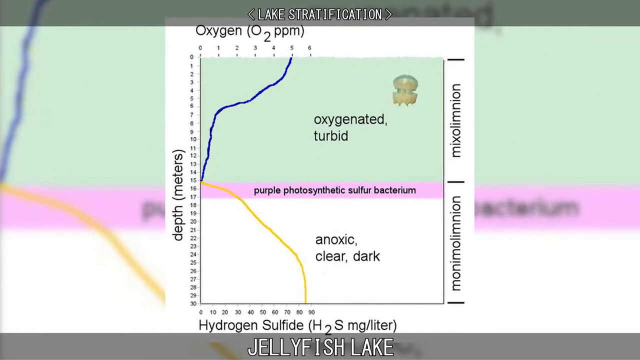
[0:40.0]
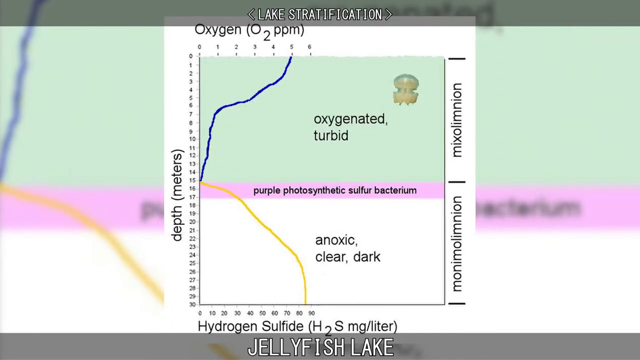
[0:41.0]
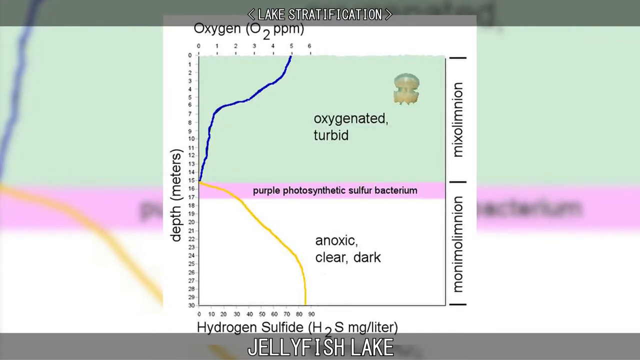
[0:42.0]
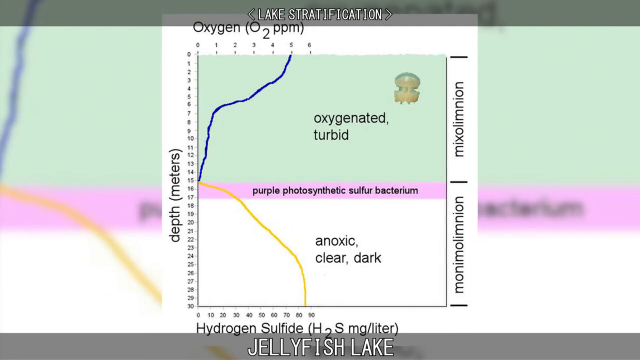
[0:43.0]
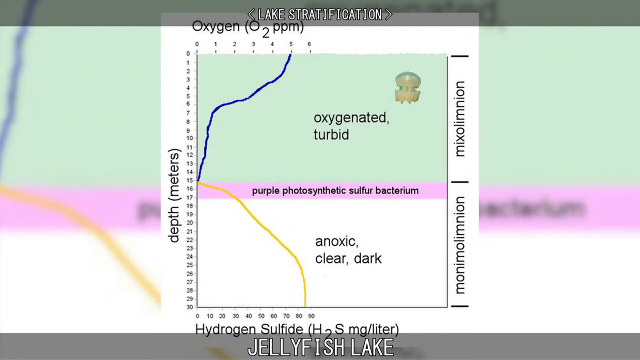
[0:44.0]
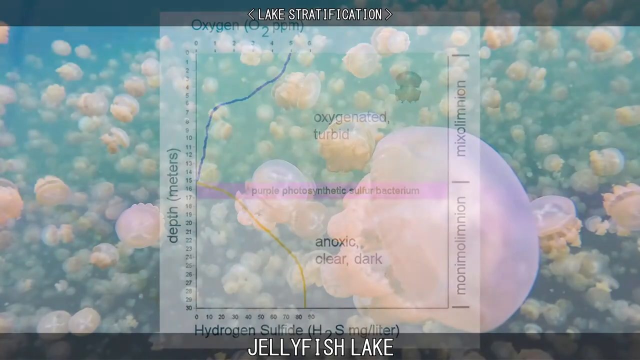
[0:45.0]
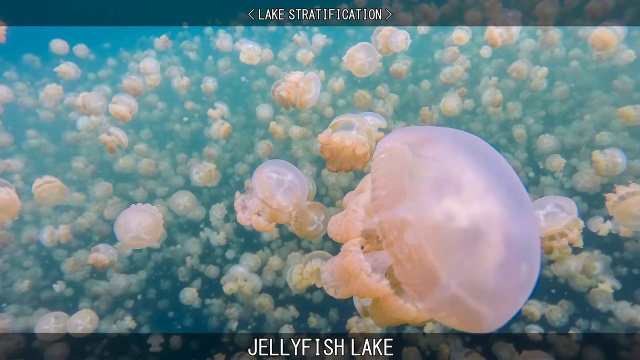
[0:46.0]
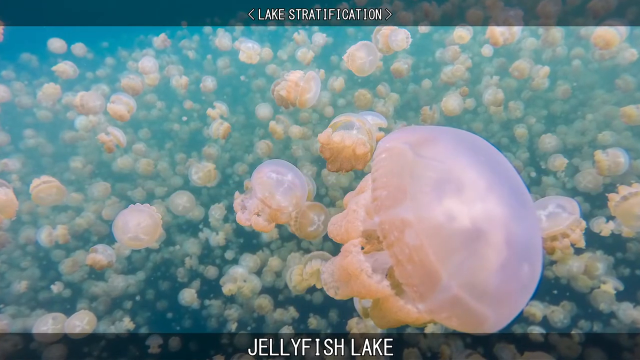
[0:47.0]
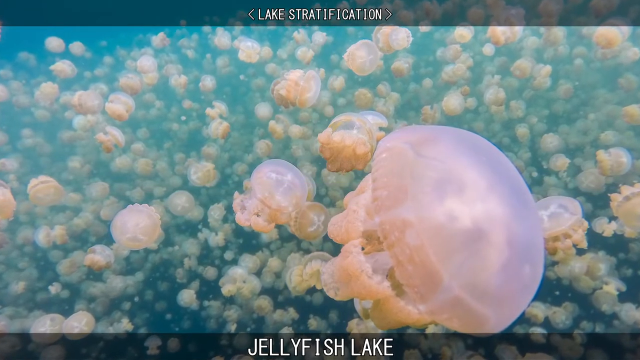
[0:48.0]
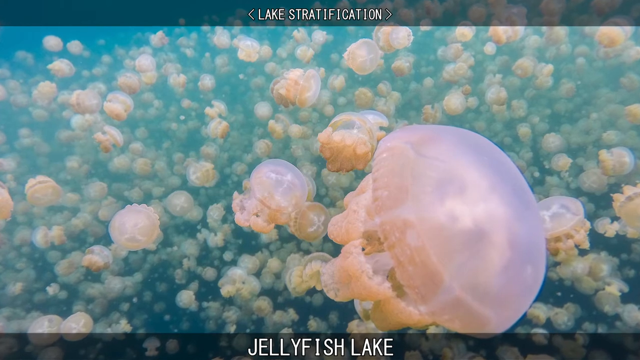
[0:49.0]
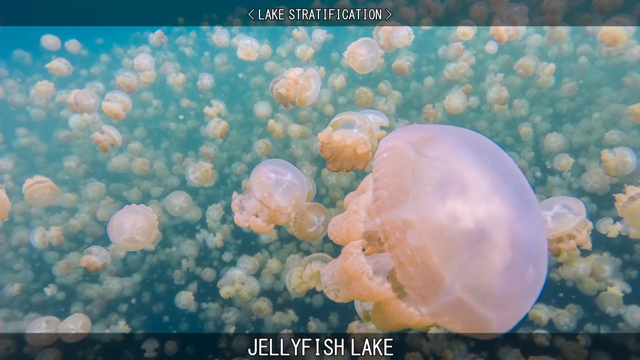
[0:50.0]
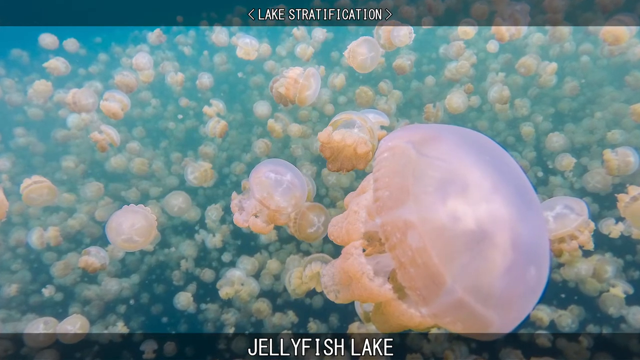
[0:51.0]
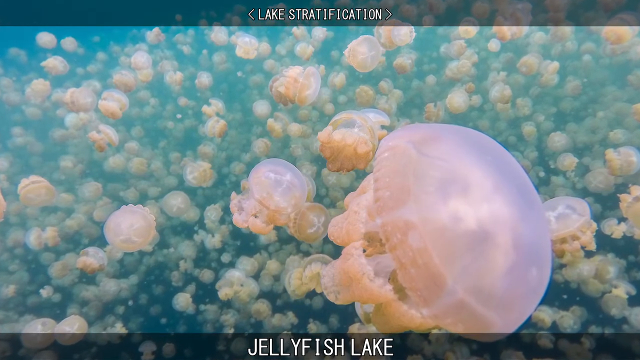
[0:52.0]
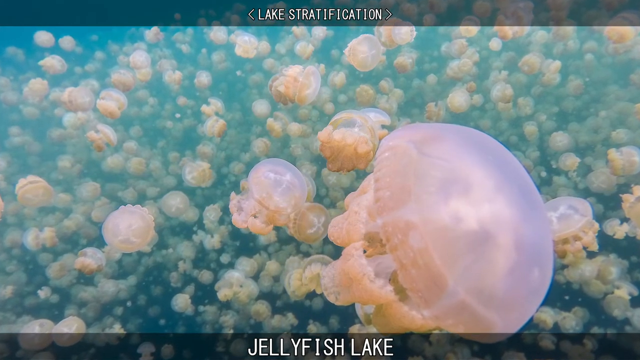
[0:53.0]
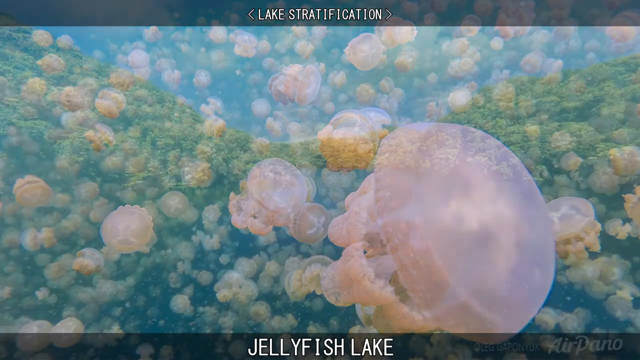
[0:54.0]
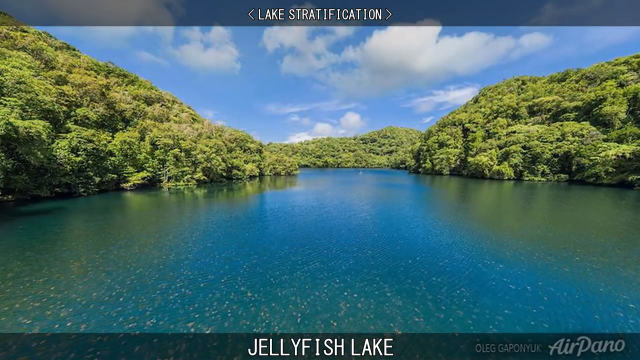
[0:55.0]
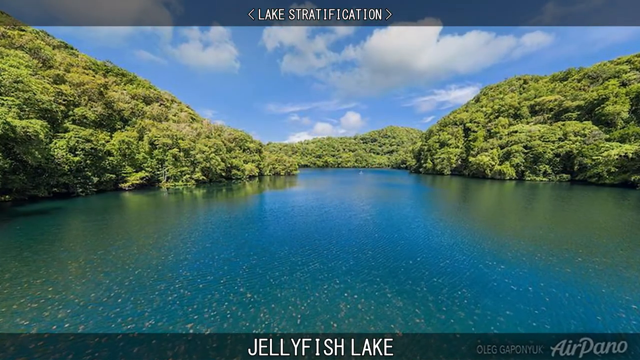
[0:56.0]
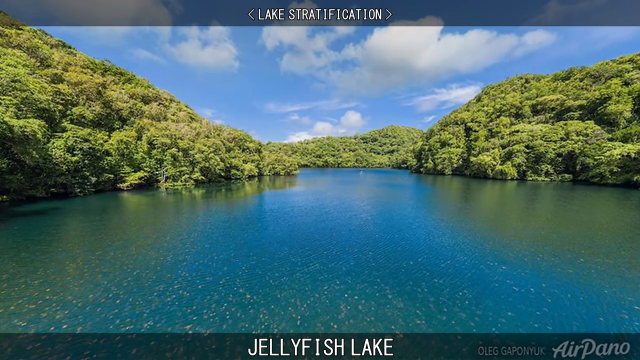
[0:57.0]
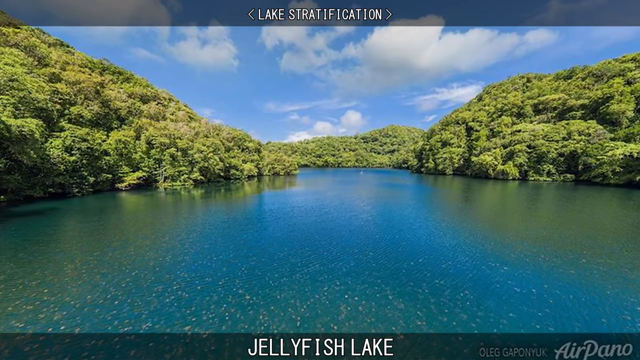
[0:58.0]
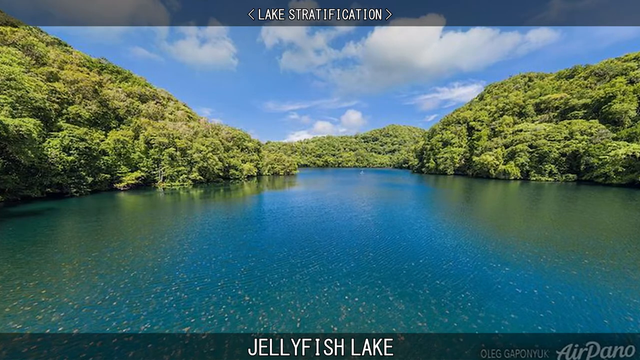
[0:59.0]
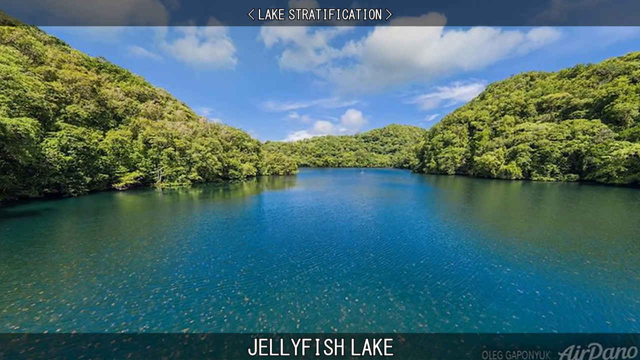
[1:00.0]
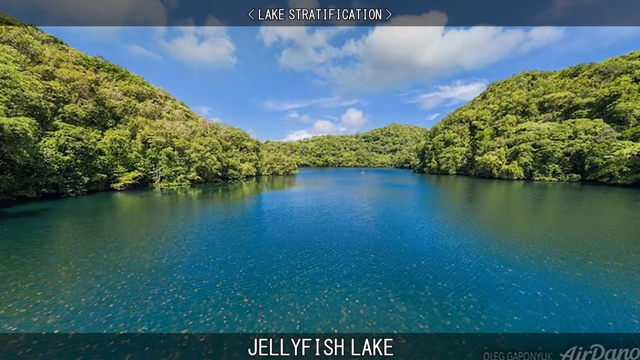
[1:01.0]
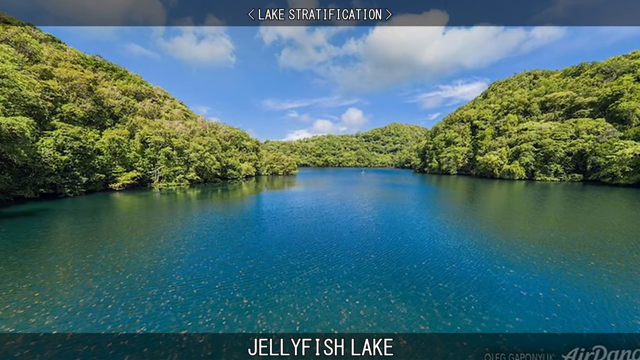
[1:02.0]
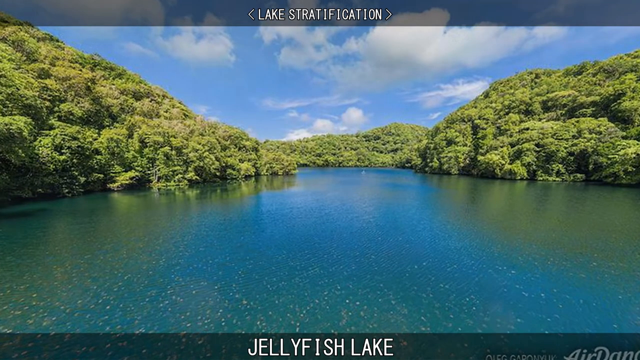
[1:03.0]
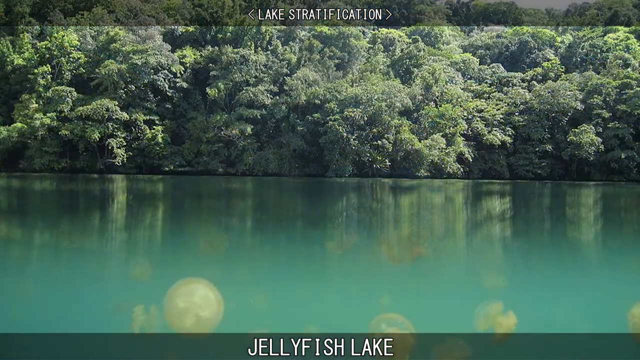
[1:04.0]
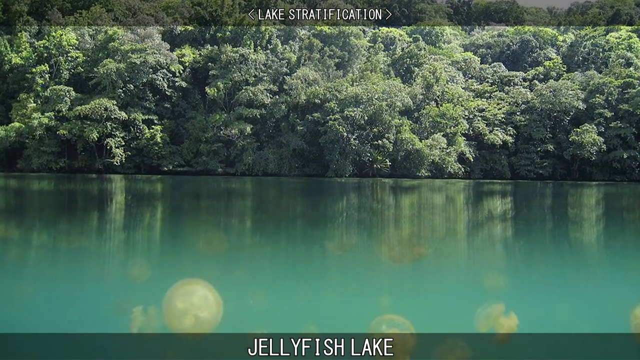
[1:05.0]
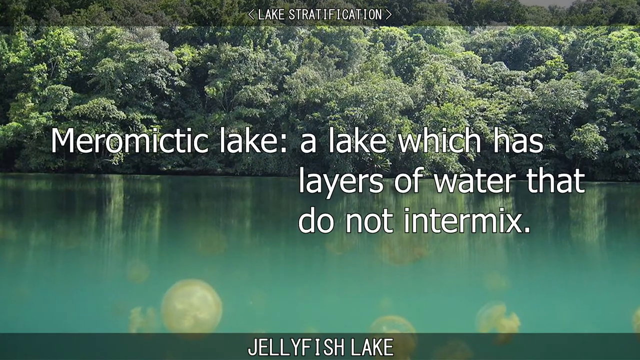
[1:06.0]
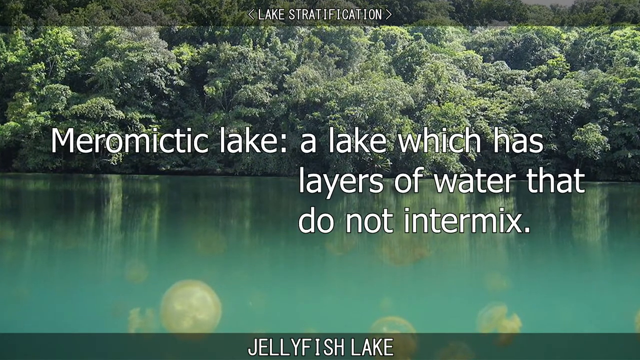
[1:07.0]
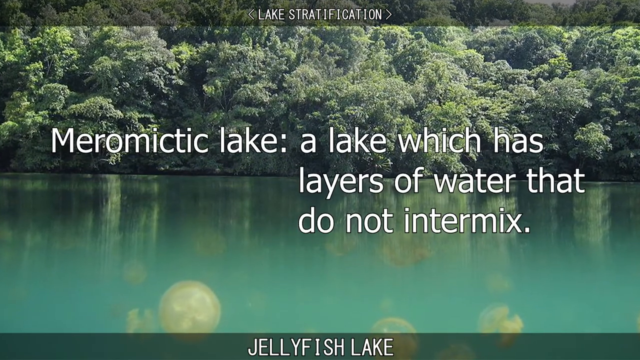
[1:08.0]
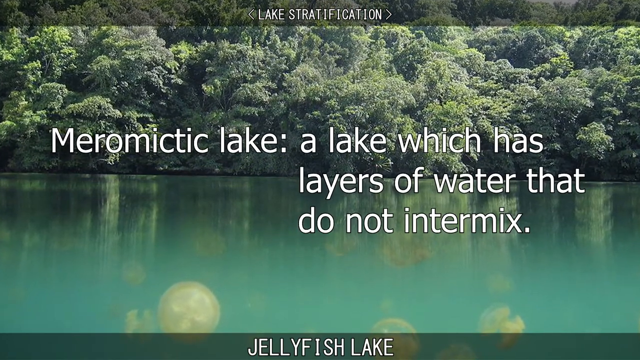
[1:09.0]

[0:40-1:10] The video shows where the jellyfish live, where the oxygen is. The lake is full of jellyfish, with thousands of them living on and visible at the surface. The lake is surrounded by what looks like lush green trees, almost like a forest, under blue skies with white clouds. The lake is presented as separated into two parts, a meromictic lake whose layers of water do not intermix. The top part is oxygenated and turbid, and that is where the jellyfish live. A purple bacterium, photosynthetic sulfobacterium, separates the two layers. Below, where the bacterium lives, the water is anoxic, clear and dark, and the jellyfish do not live there.